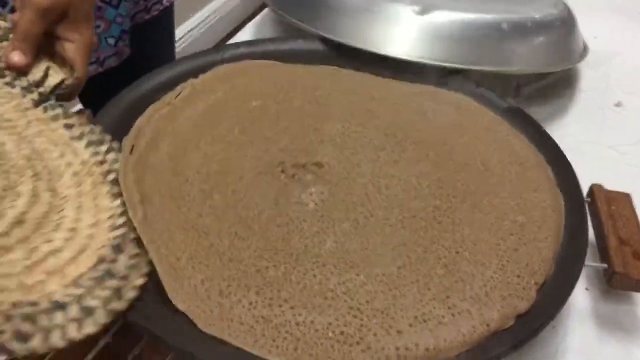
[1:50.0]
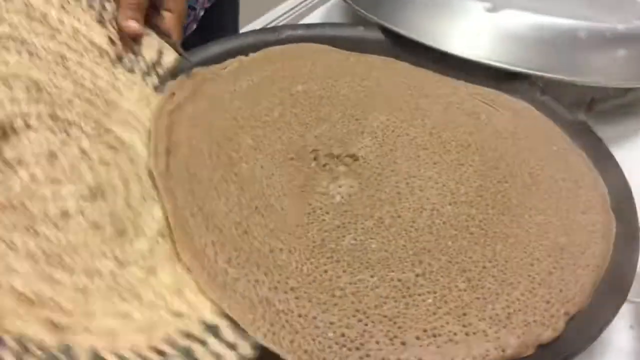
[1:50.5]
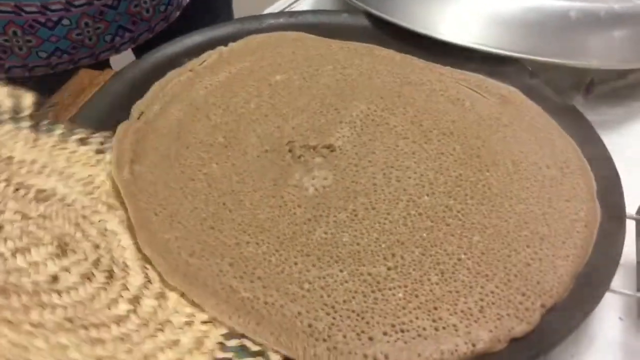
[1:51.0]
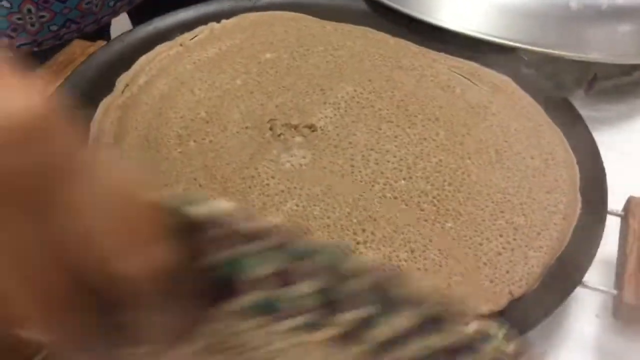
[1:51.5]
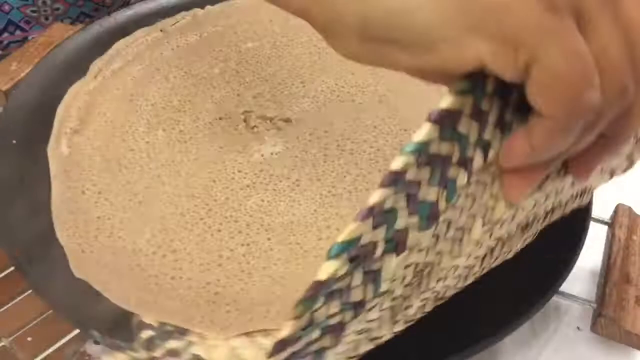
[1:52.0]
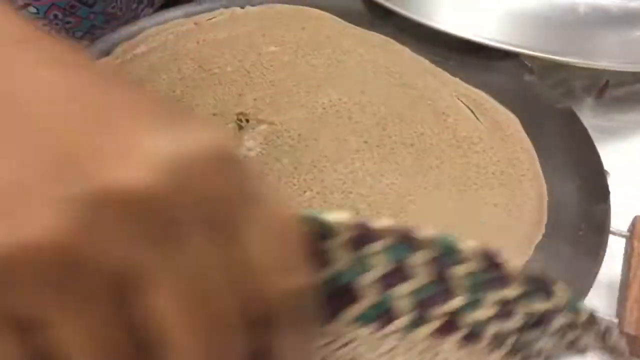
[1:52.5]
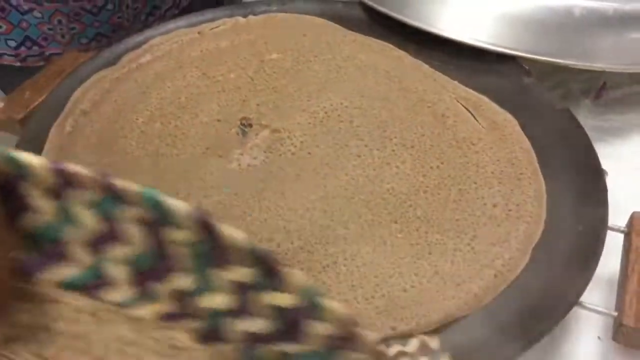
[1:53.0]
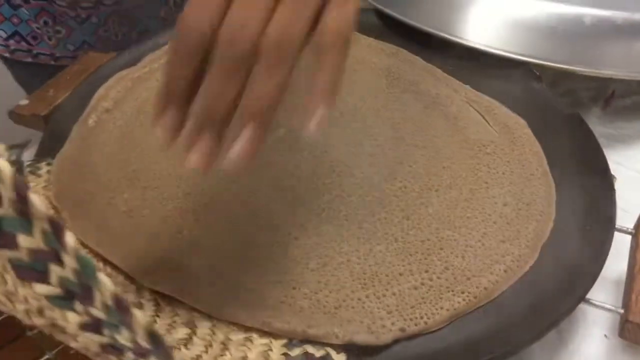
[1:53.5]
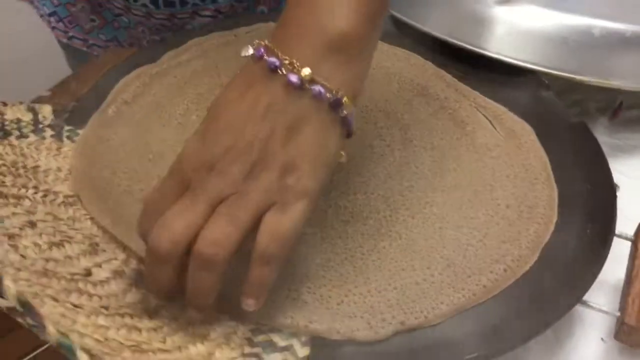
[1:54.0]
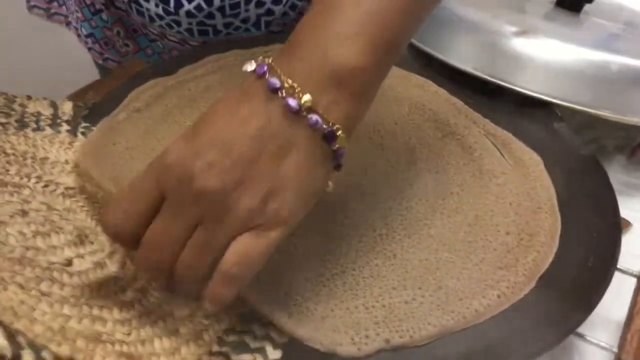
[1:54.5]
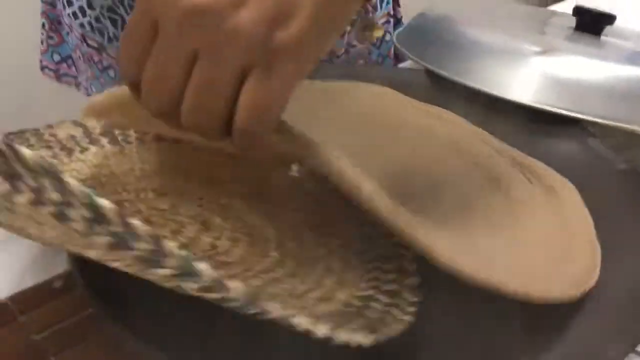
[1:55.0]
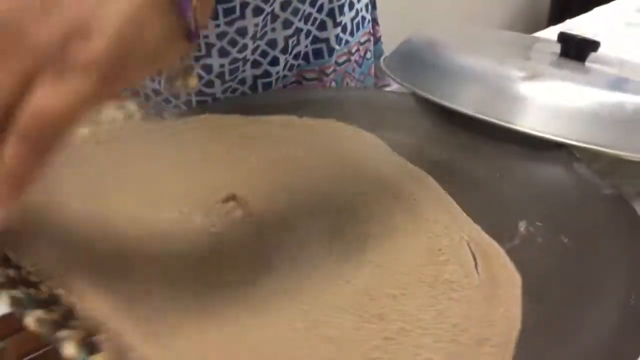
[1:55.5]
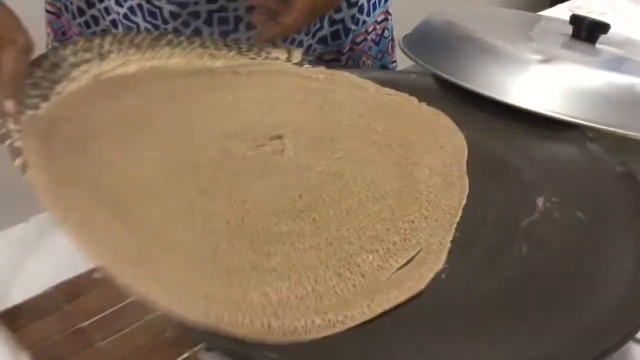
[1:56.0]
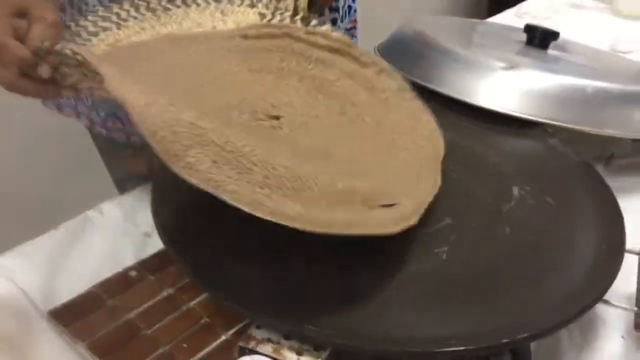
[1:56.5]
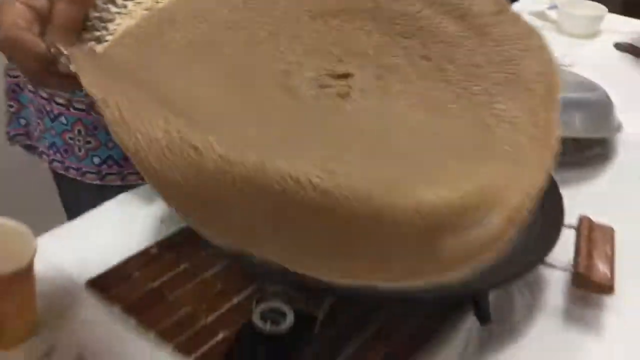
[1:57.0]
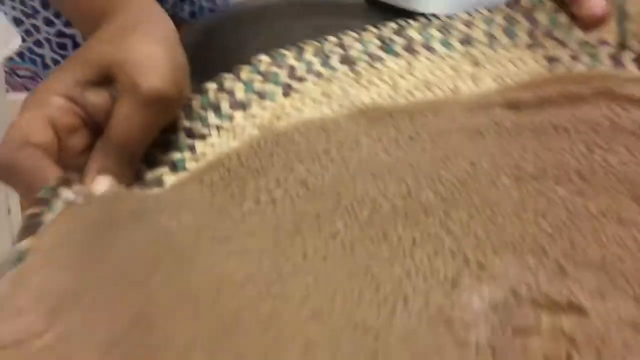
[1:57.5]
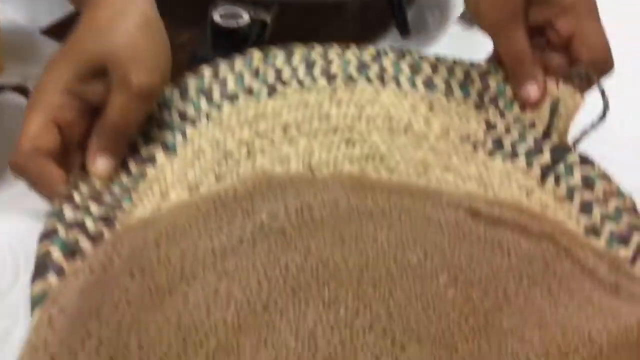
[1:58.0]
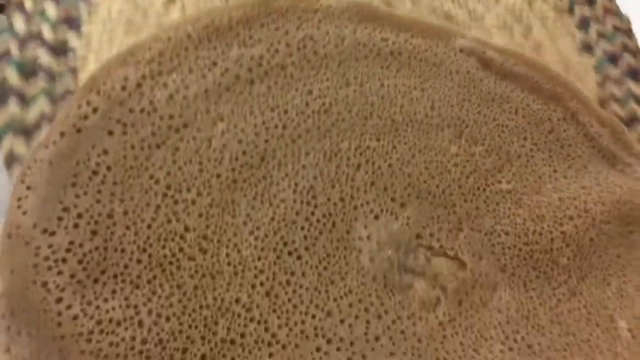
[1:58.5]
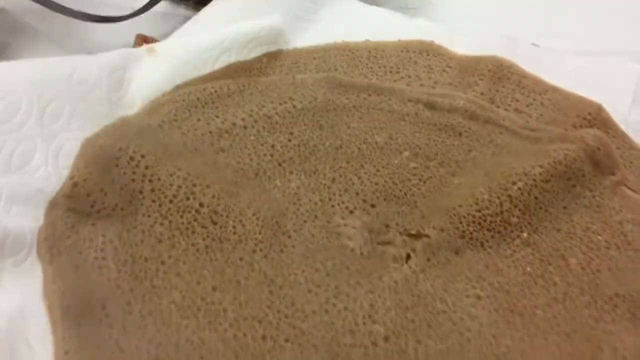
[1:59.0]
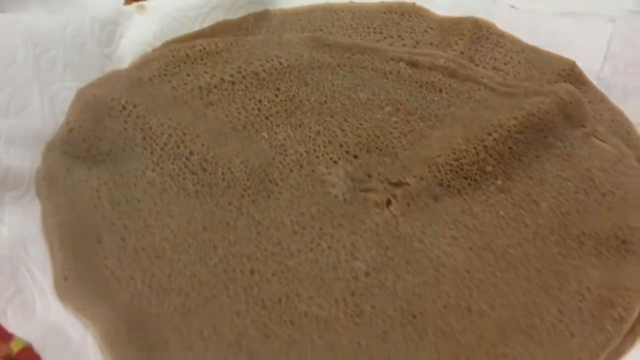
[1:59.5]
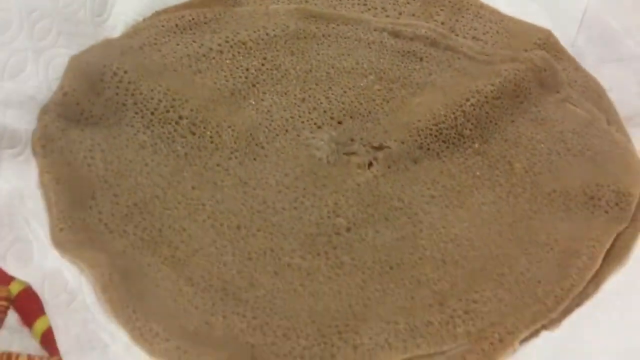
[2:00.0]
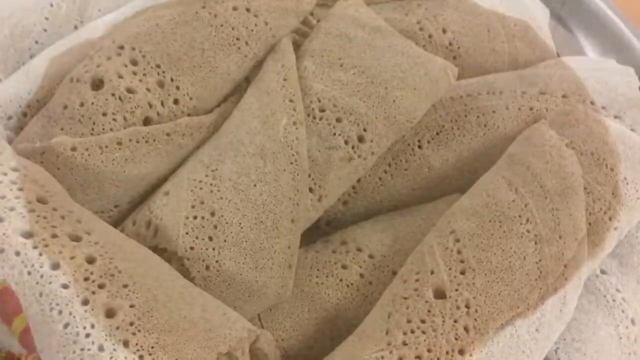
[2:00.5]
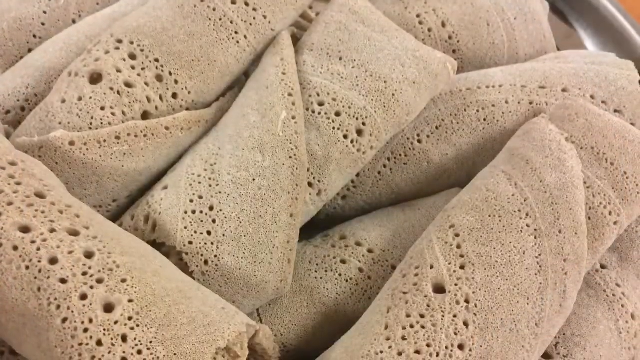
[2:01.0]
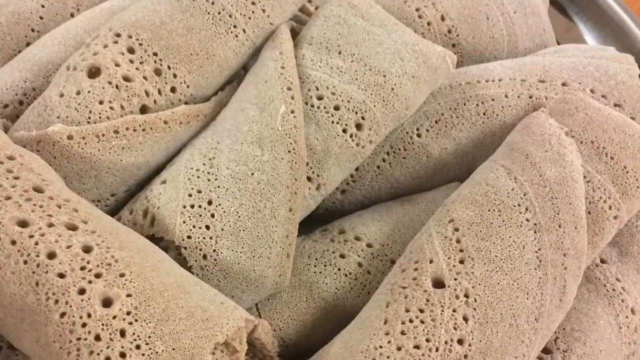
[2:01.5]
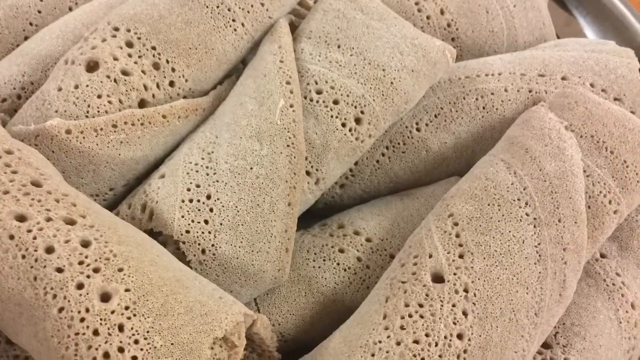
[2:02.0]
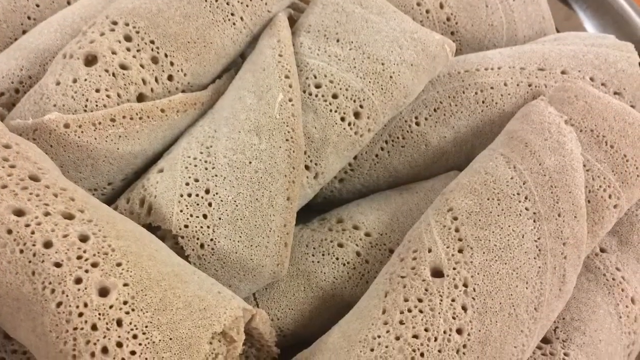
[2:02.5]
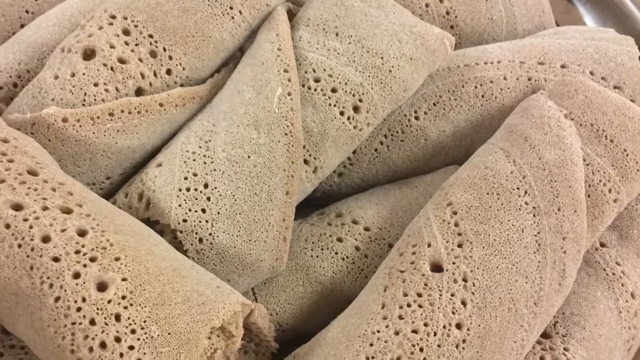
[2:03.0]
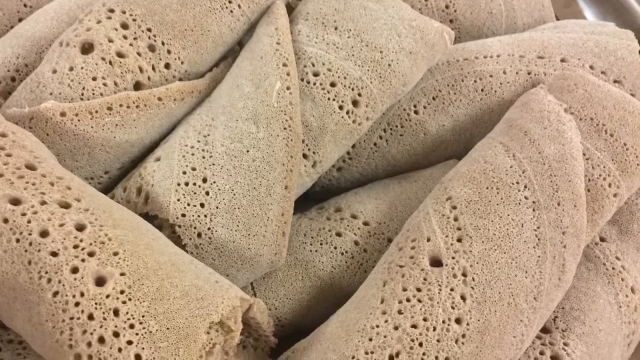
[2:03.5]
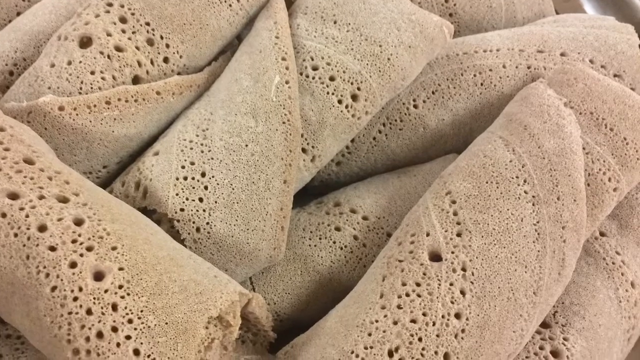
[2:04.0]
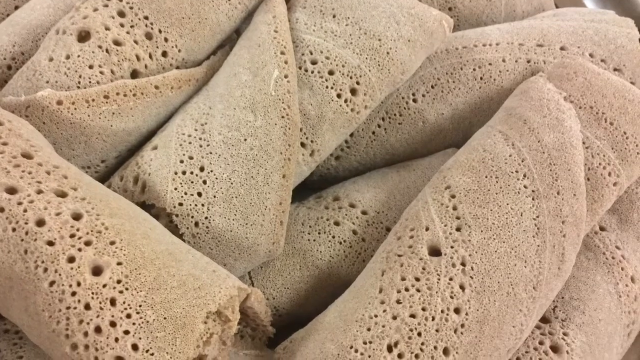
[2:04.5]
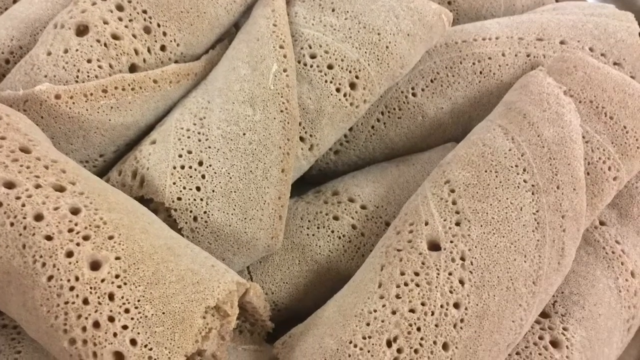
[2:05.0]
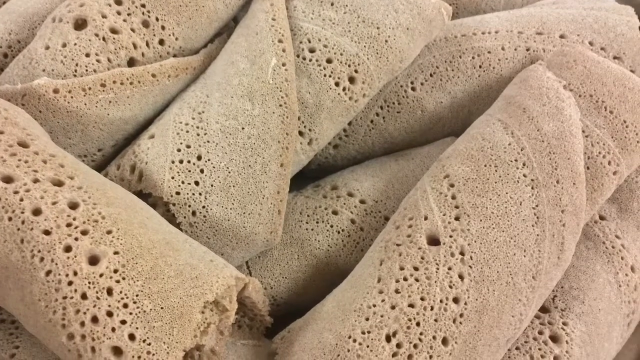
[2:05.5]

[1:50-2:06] She holds the circular mat, which has a woven pattern, scoops the left-hand side of the flour pancake and wraps it around the bottom of the edges, then uses her left hand to scoop up the entire pancake. She lifts it with both hands, moves it forward toward the camera and places it down onto the table, then lifts the mat away, leaving the pancake on top of the pre-existing pancake. A little steam comes off the completed pancake as she puts it on top of the other. She wears a blue patterned dress and has purple and gold bracelets on her left hand. The metal lid rests on the side of the hot plate. A final still image shows about 10 of the pancakes as the camera pans slowly downward.